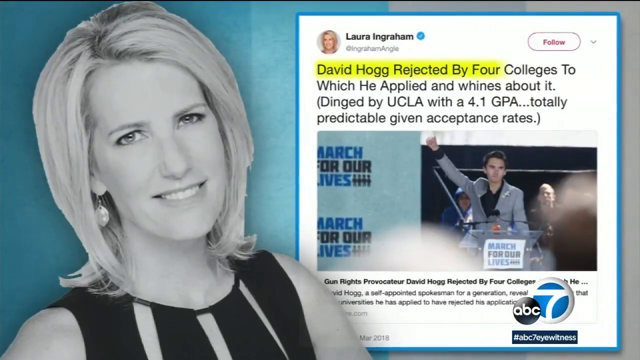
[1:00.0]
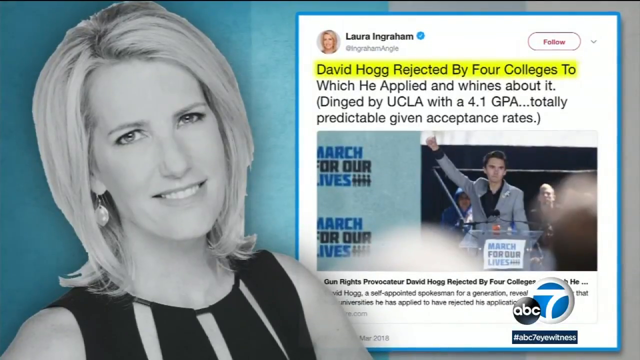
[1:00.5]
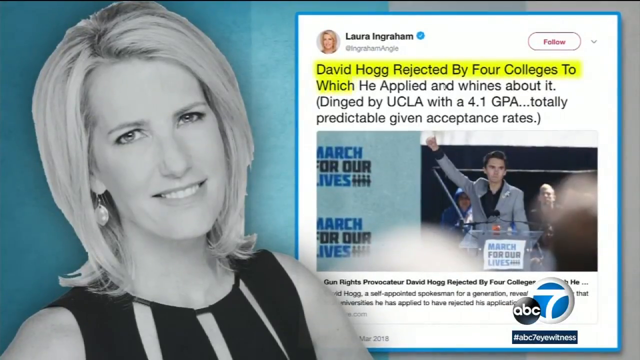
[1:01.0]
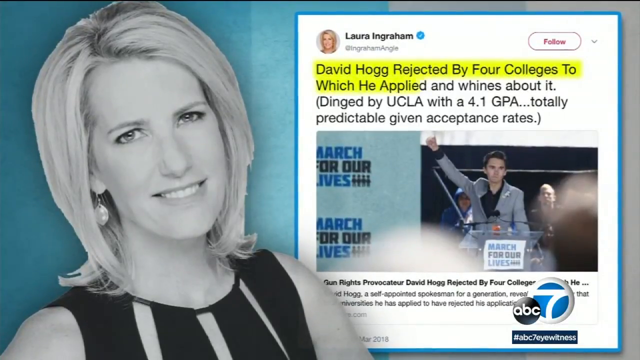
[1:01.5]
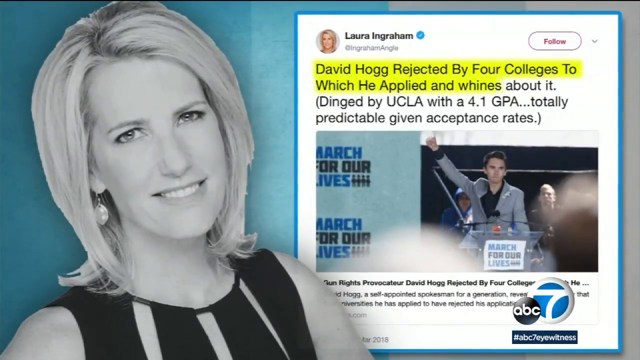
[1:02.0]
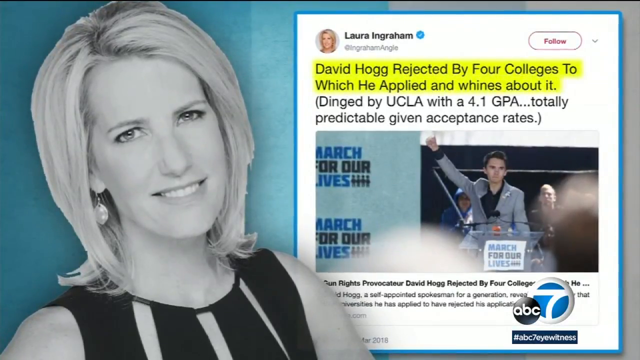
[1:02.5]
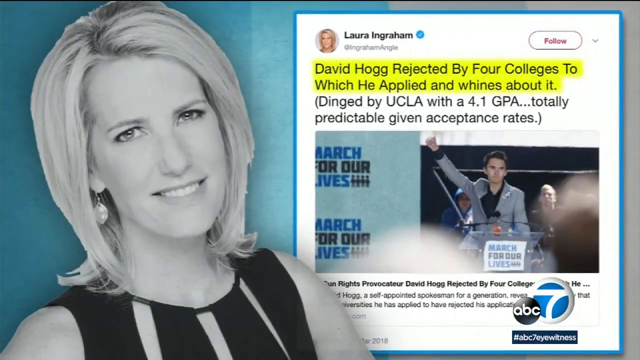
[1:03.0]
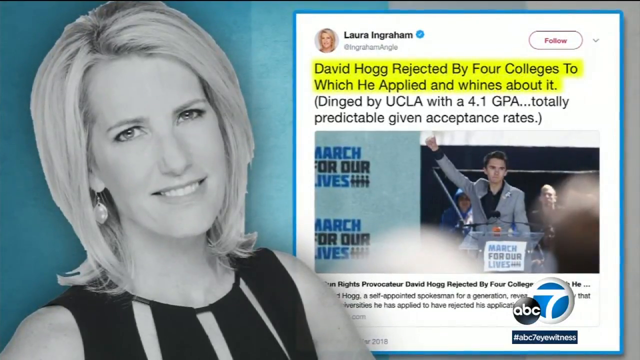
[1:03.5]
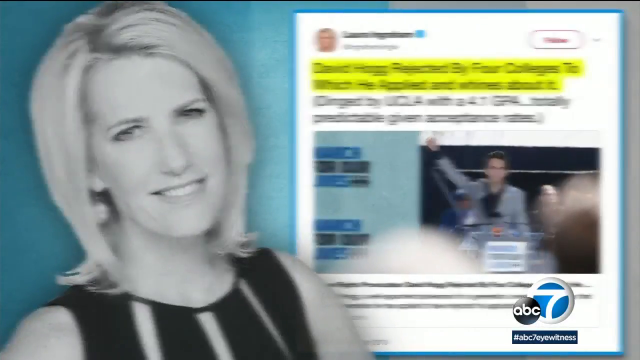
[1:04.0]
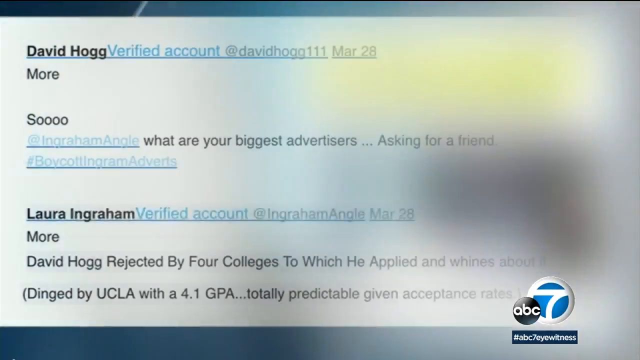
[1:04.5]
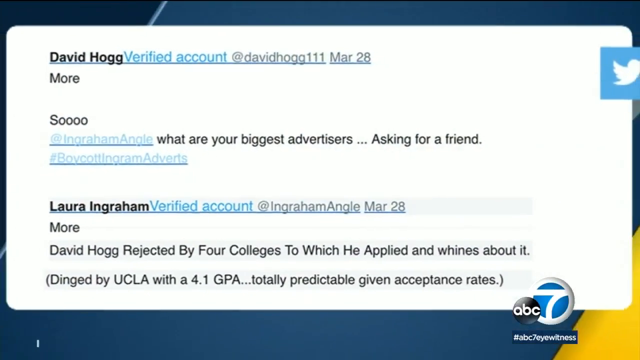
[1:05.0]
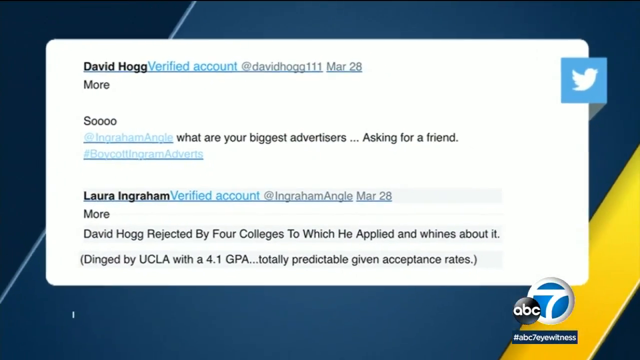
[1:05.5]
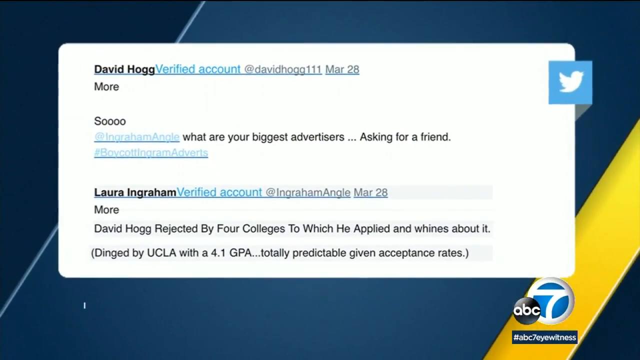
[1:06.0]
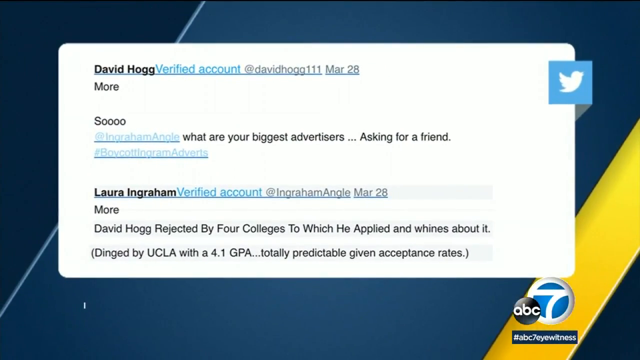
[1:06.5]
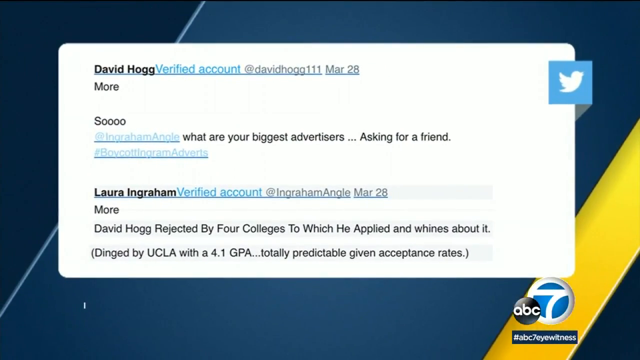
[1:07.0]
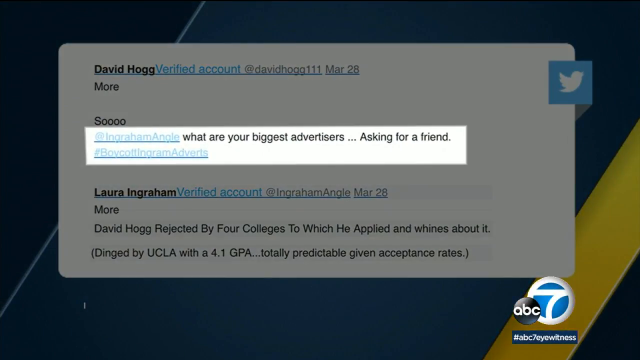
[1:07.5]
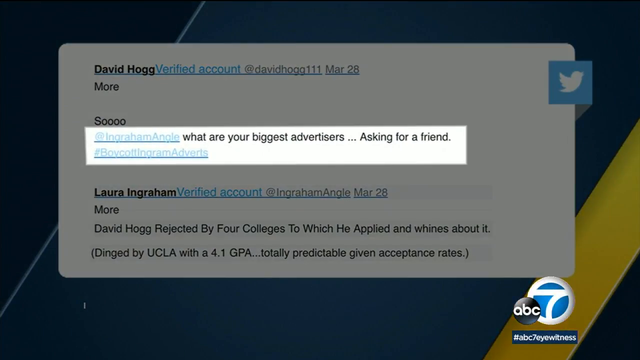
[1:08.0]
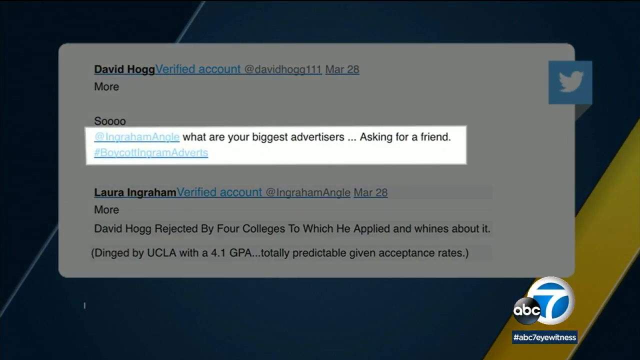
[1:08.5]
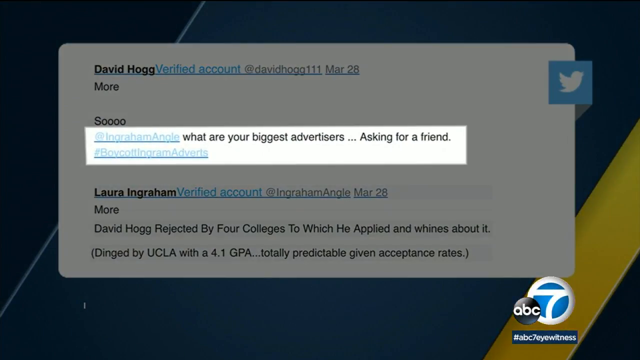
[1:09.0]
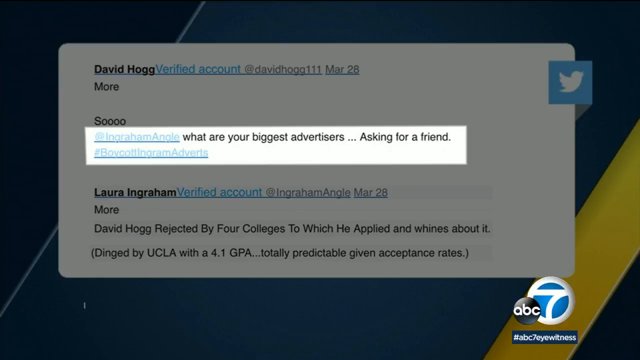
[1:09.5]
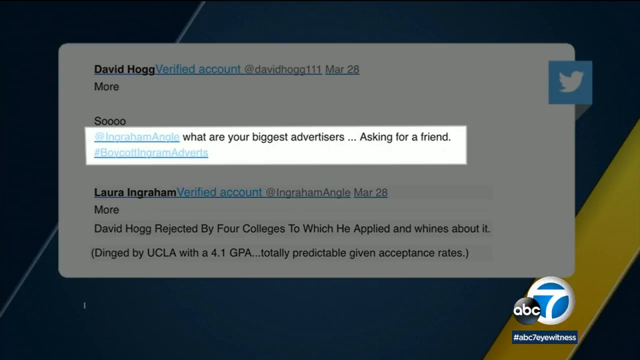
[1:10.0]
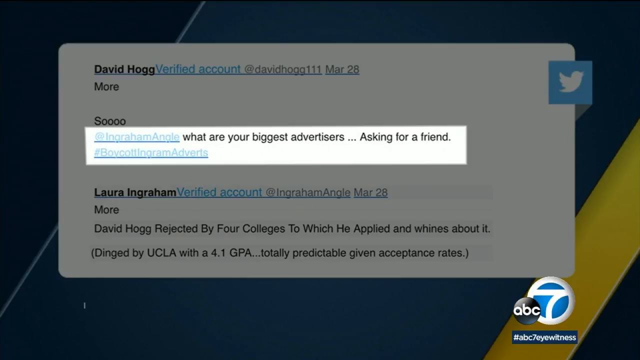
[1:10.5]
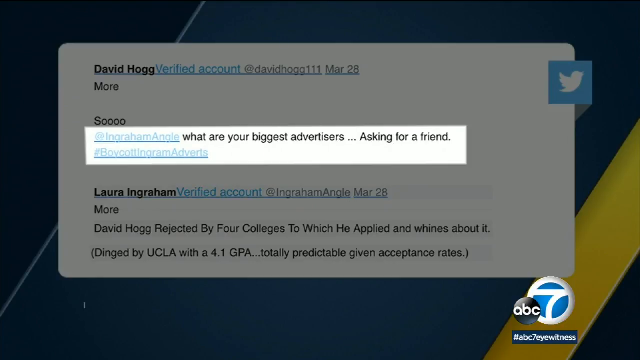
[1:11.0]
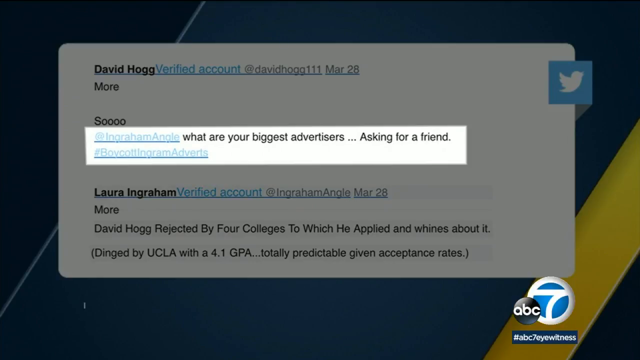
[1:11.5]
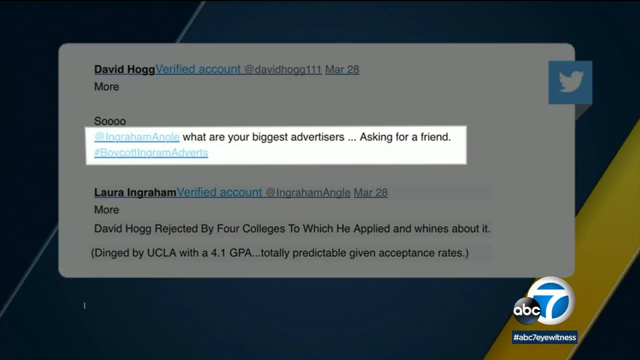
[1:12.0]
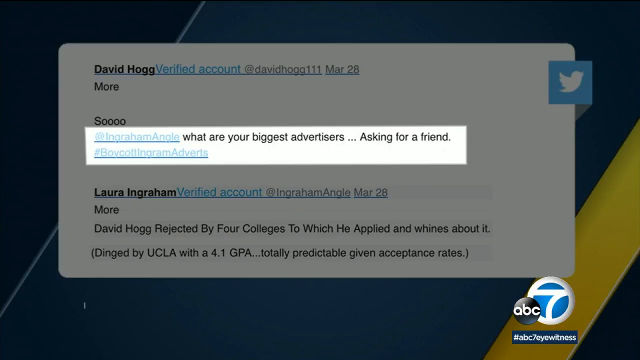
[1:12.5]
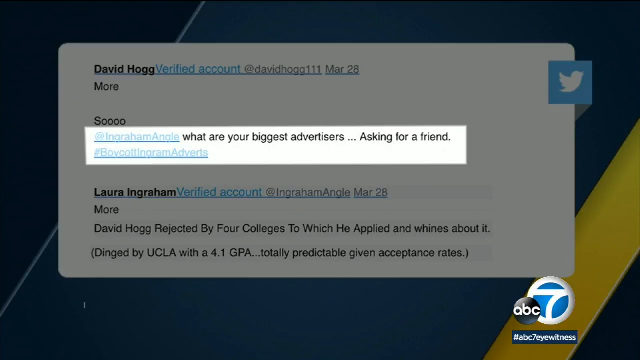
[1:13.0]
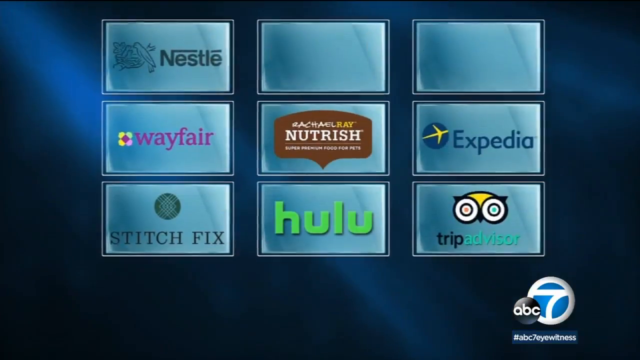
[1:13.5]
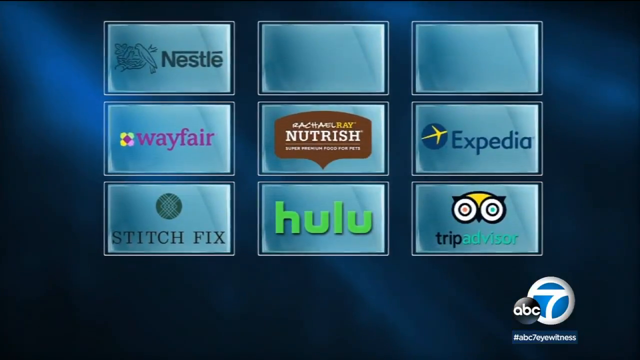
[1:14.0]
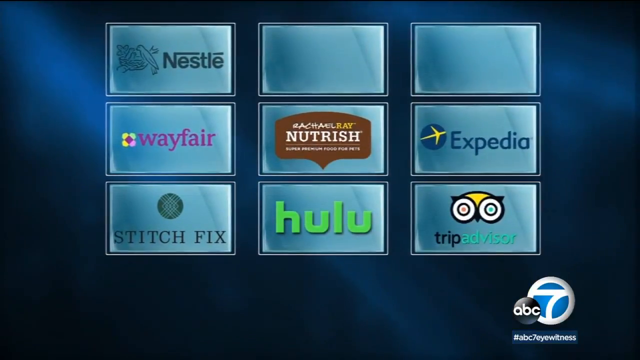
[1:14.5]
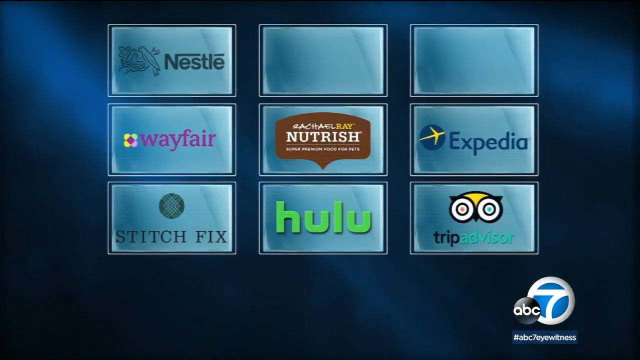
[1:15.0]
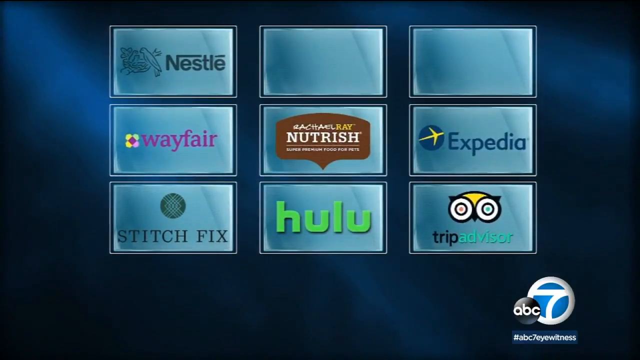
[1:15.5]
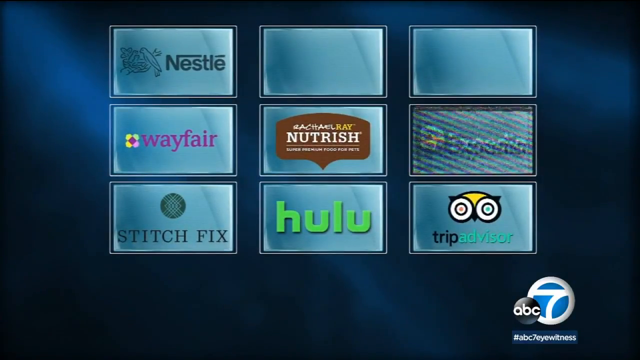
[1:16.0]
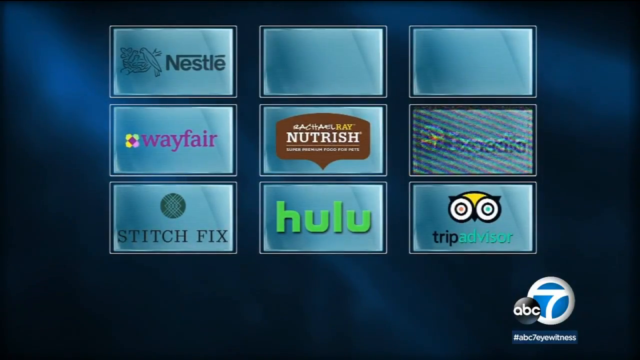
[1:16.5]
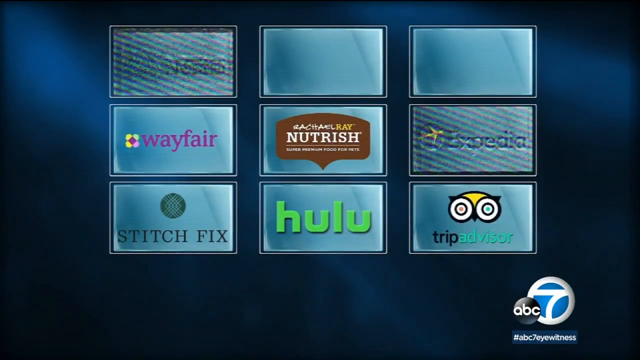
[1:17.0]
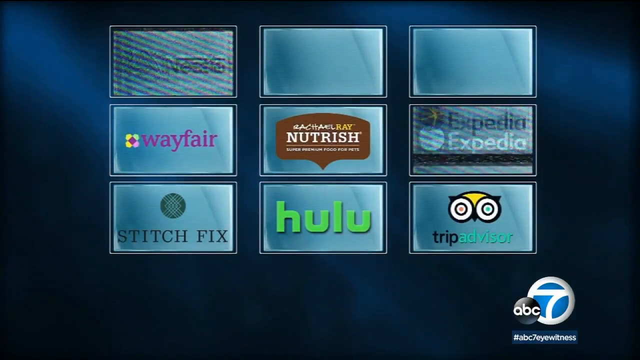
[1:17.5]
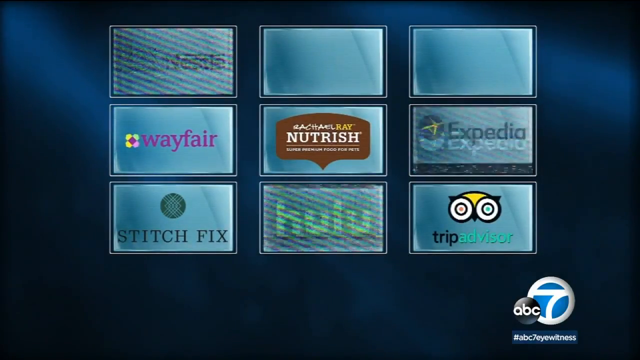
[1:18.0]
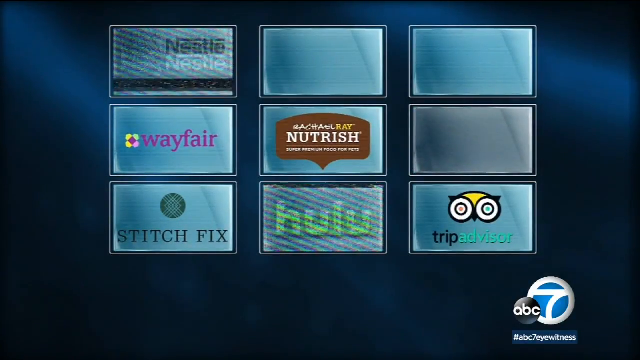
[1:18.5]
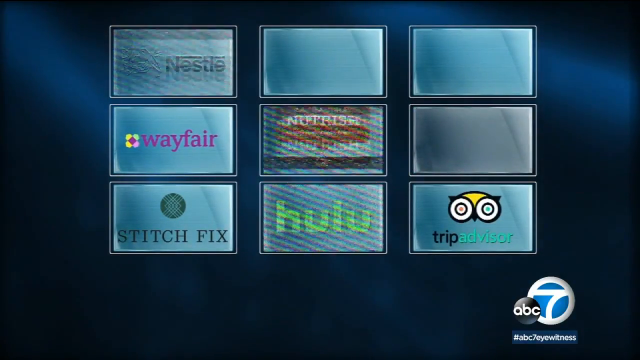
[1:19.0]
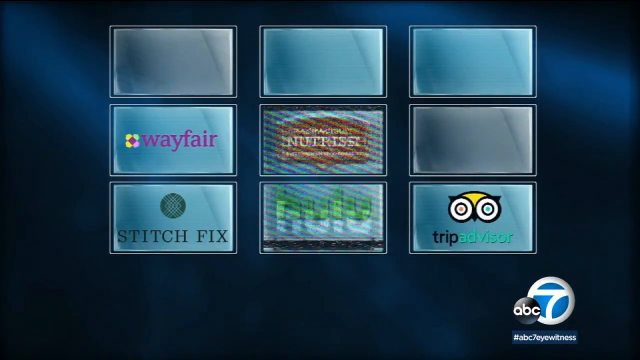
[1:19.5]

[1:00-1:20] A picture of Laura Ingraham in a black dress with gold hair and earrings is shown along with her Twitter post, which reads "David Hogg rejected by four colleges to which he applied and whines about it." and mentions a 4.1 GPA and "totally predictable given acceptance rate". A picture of David is shown with a paper reading "match for our lives", and he raises his hand in front of people. Text states that David was rejected by four colleges and calls him a self-appointed spokesperson for a generation. Both David and Laura Ingraham have verified accounts.